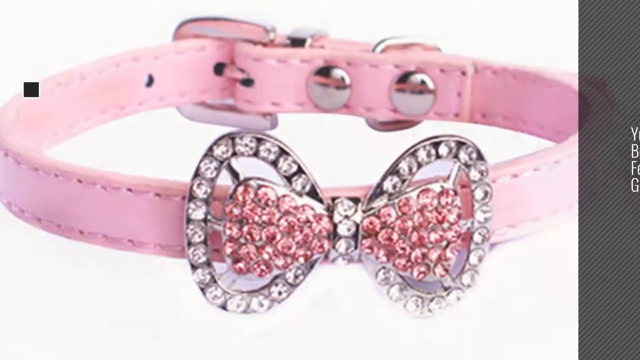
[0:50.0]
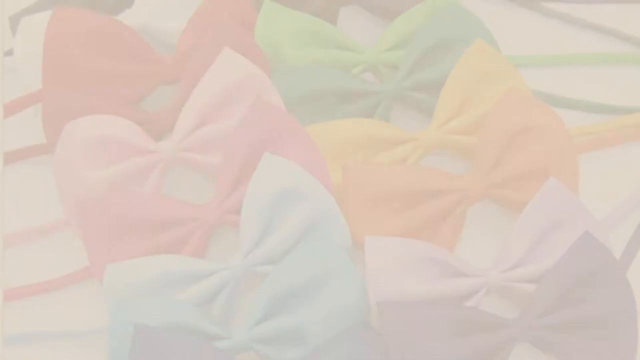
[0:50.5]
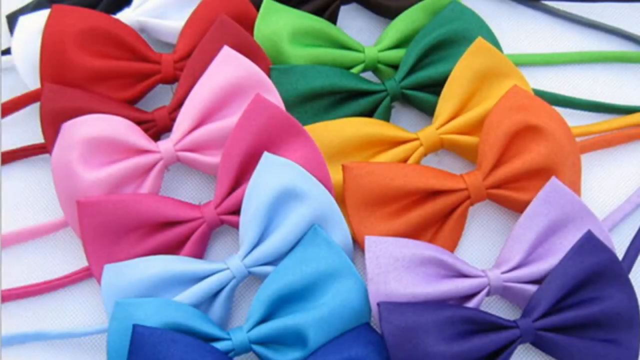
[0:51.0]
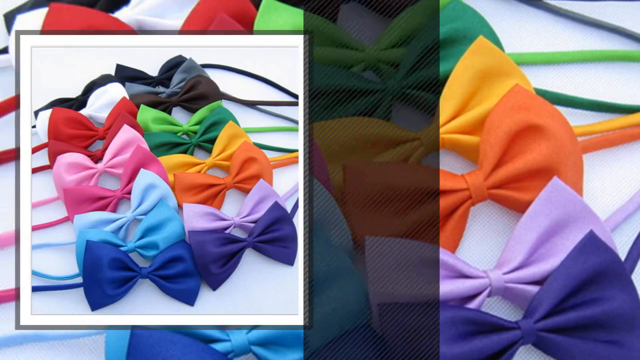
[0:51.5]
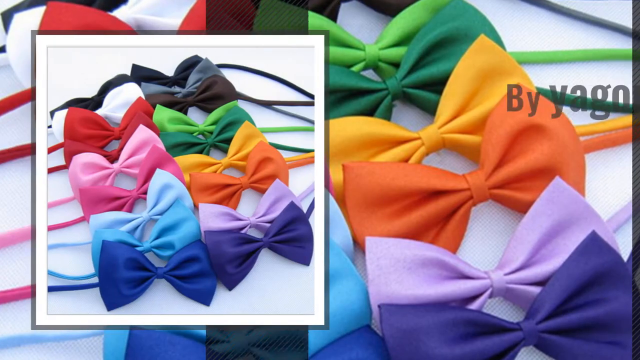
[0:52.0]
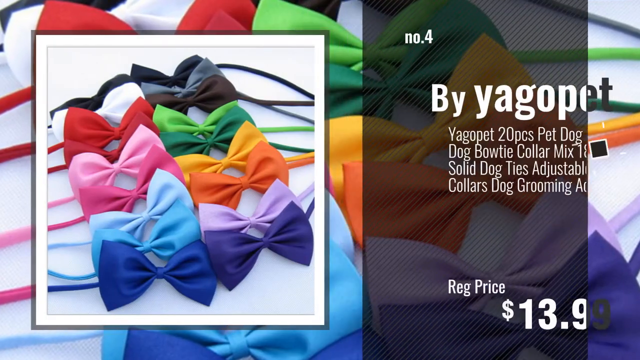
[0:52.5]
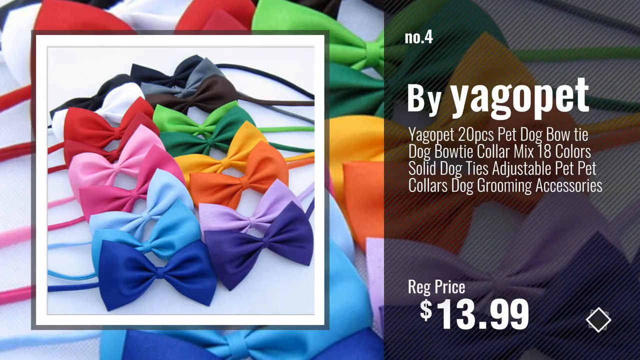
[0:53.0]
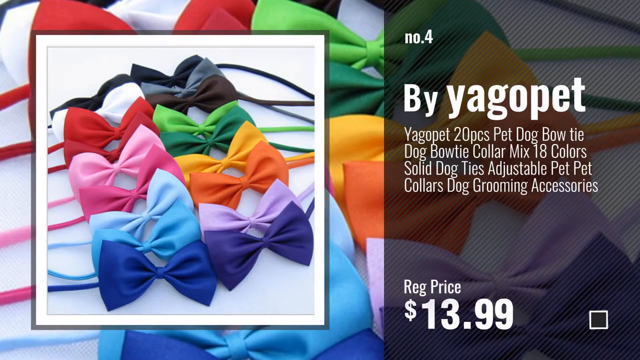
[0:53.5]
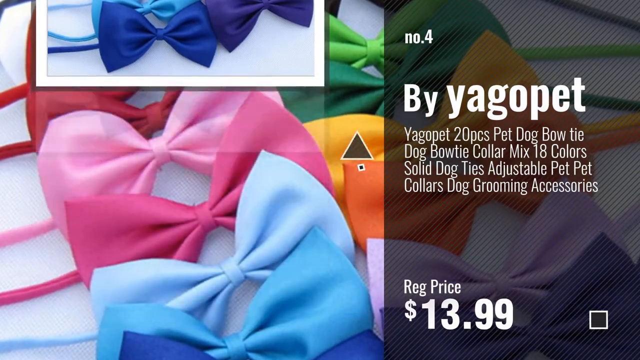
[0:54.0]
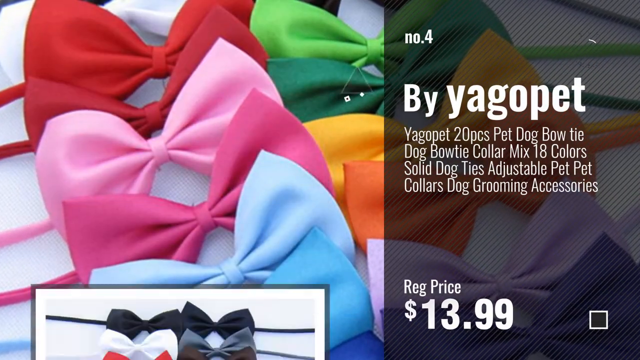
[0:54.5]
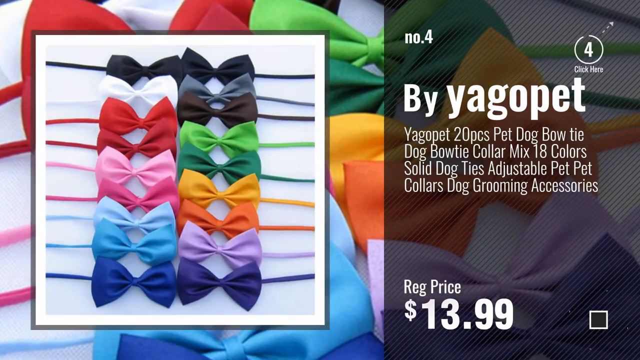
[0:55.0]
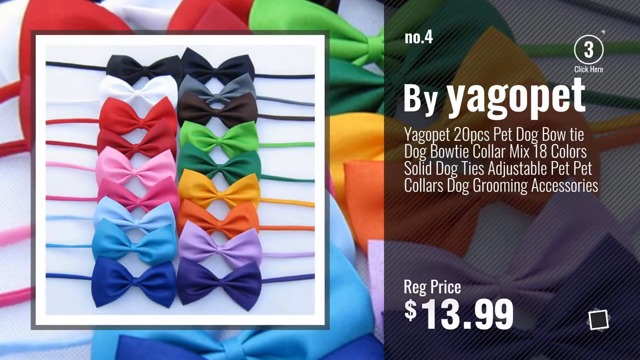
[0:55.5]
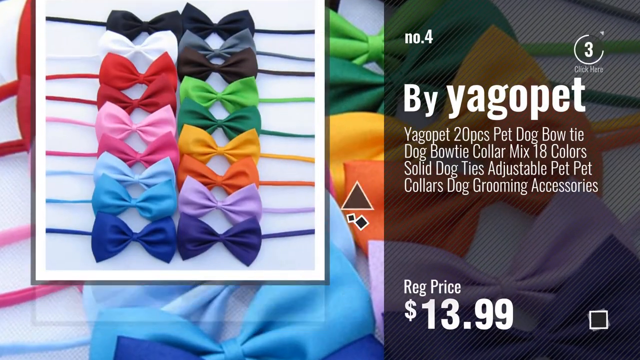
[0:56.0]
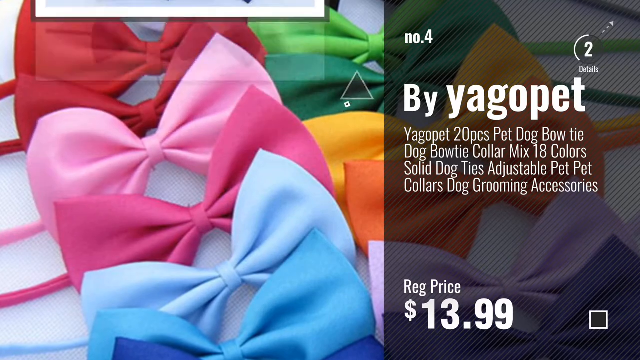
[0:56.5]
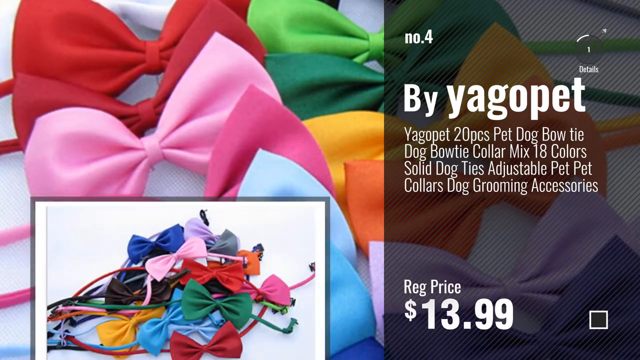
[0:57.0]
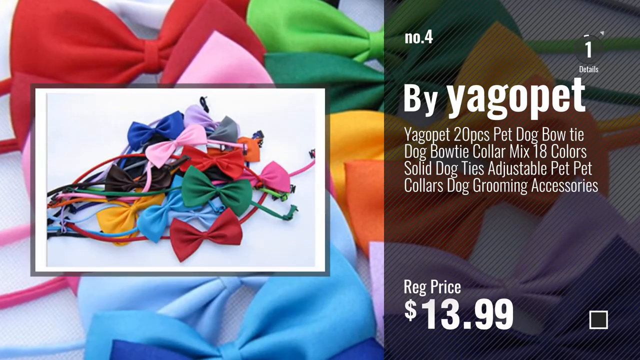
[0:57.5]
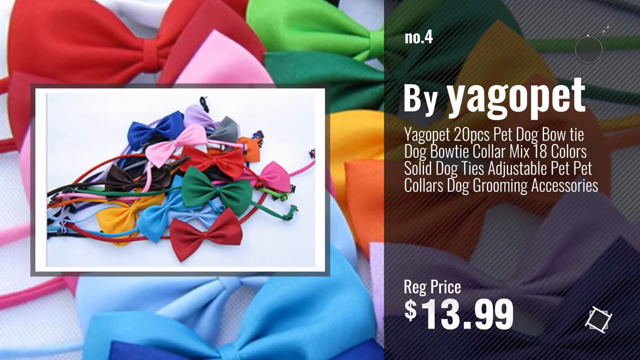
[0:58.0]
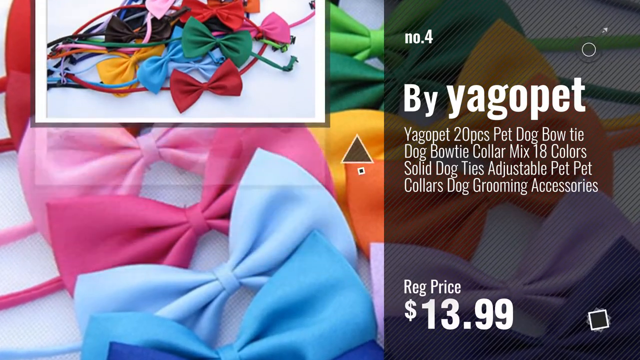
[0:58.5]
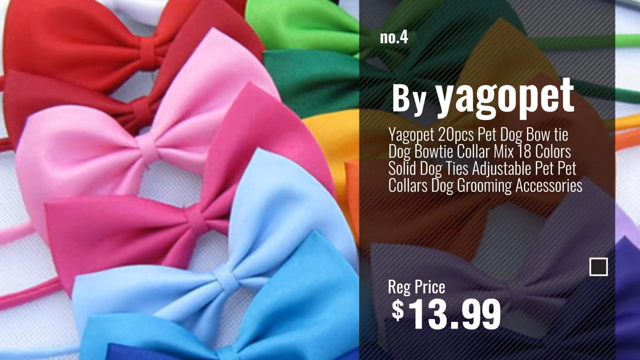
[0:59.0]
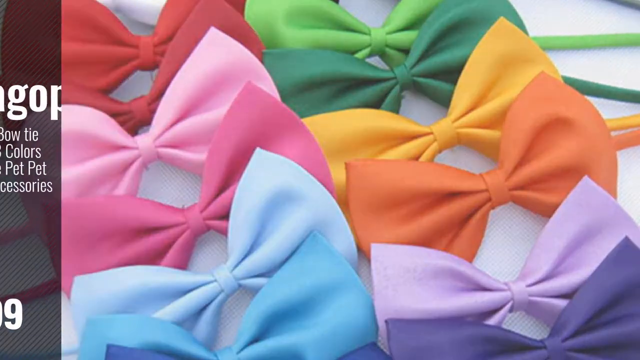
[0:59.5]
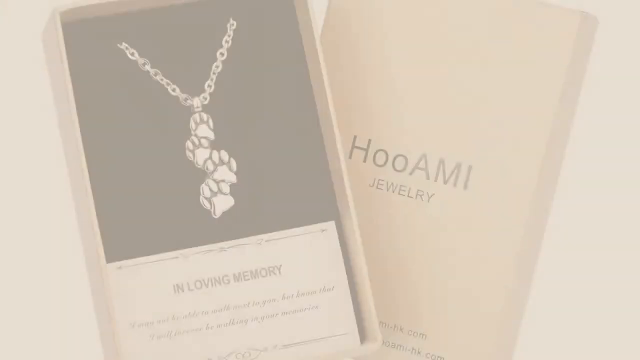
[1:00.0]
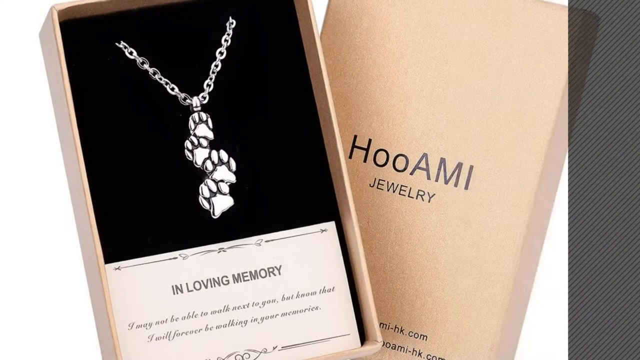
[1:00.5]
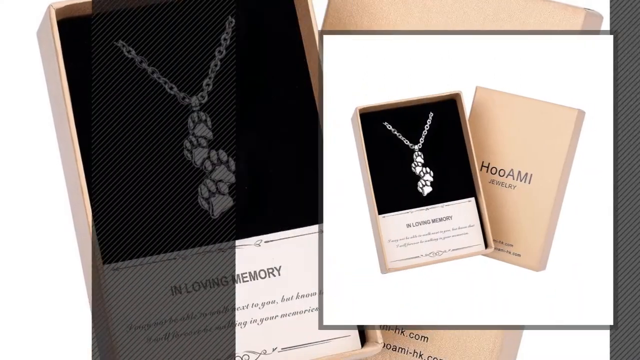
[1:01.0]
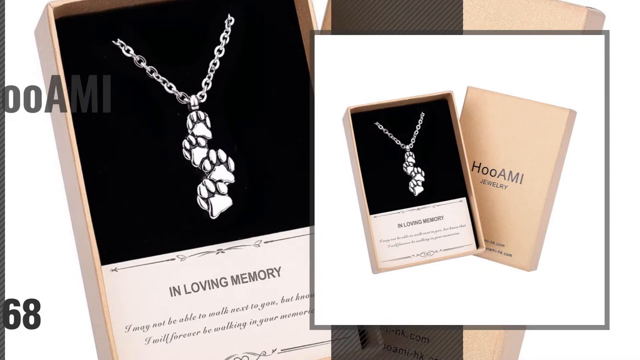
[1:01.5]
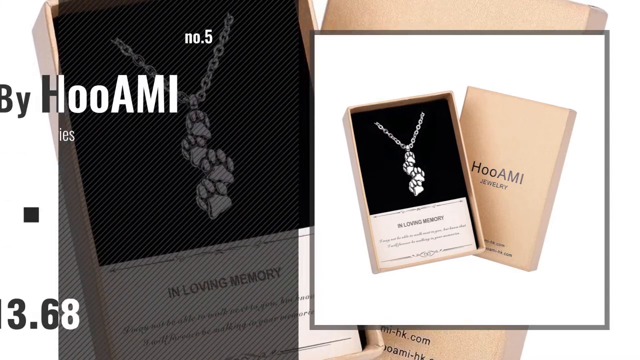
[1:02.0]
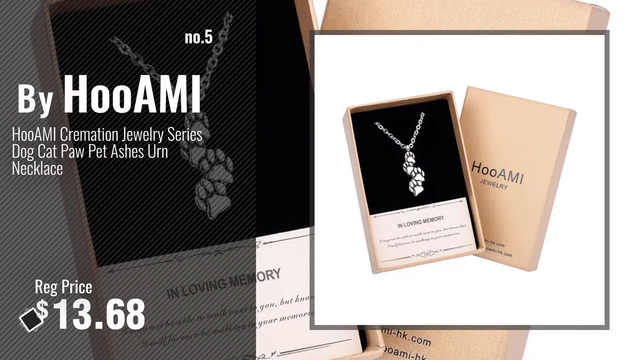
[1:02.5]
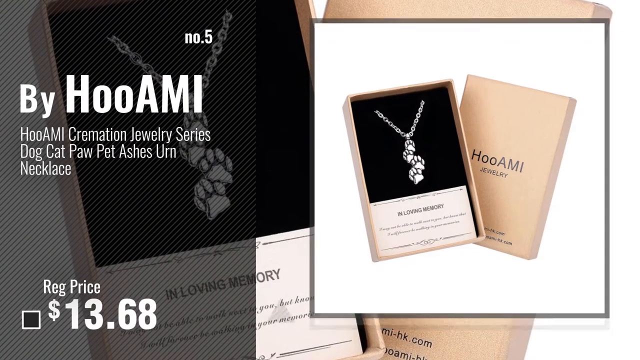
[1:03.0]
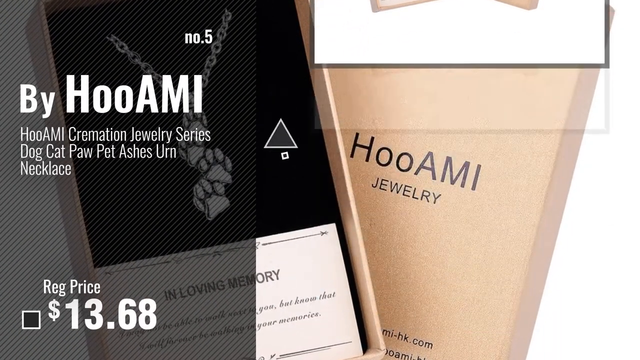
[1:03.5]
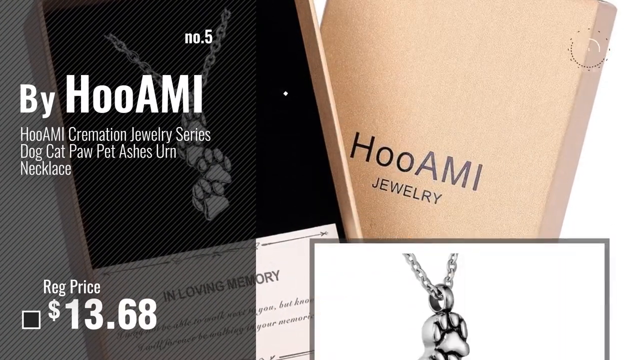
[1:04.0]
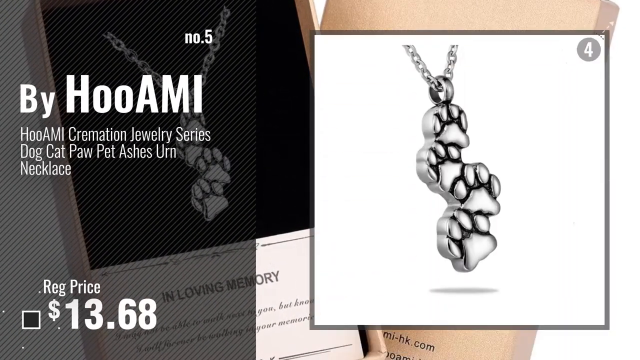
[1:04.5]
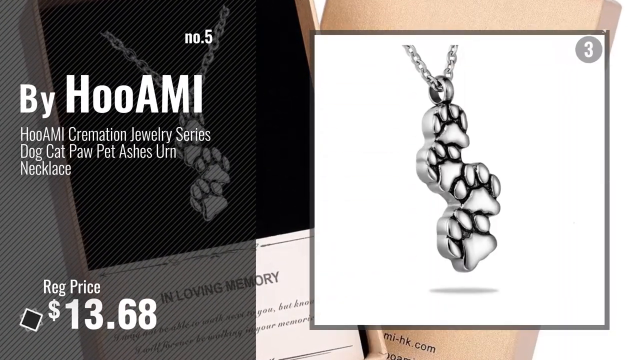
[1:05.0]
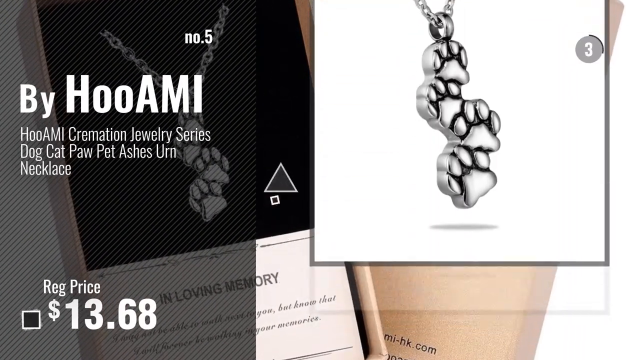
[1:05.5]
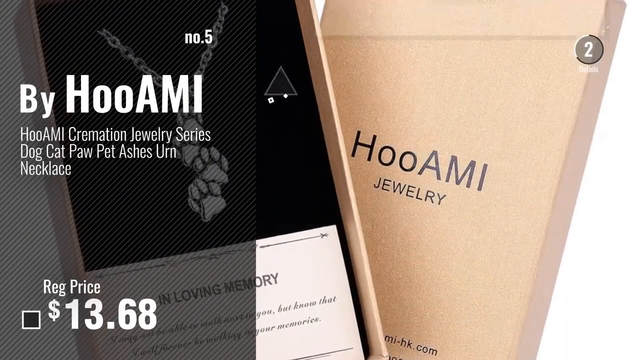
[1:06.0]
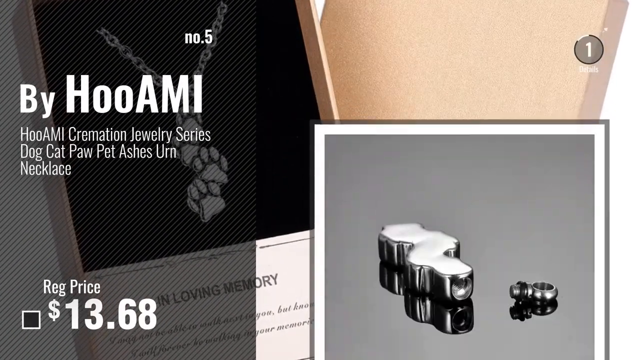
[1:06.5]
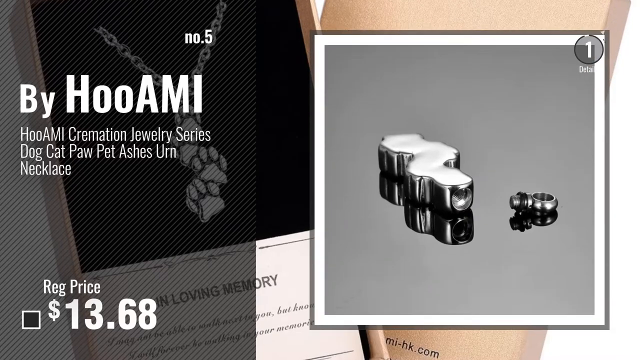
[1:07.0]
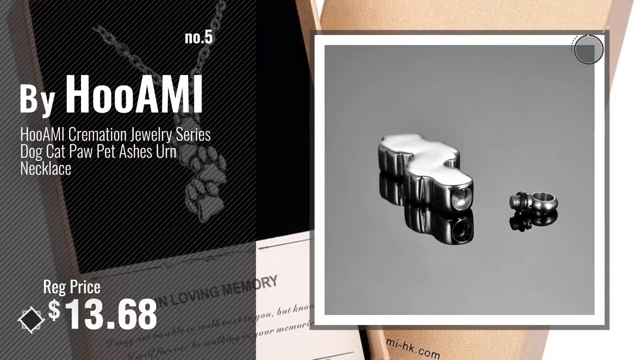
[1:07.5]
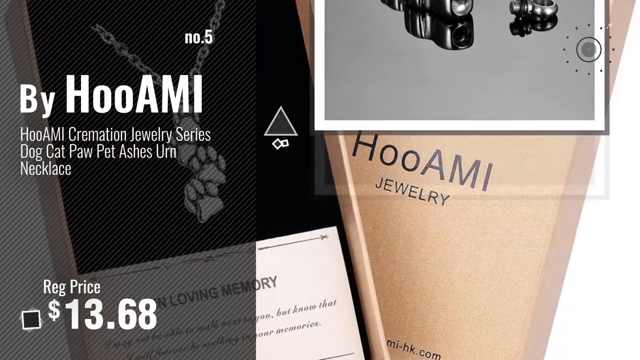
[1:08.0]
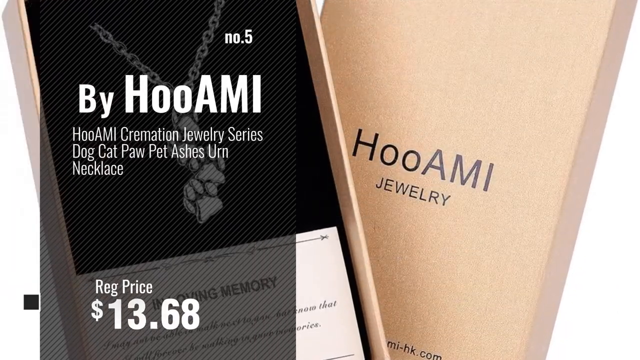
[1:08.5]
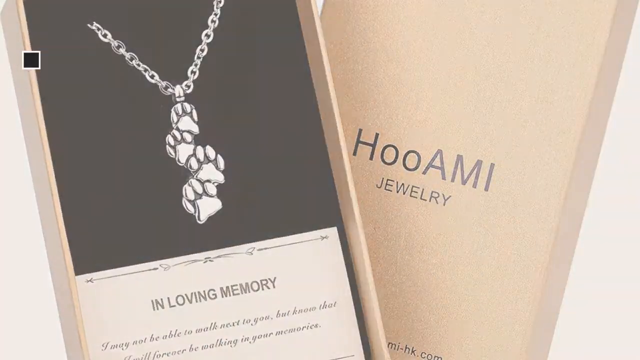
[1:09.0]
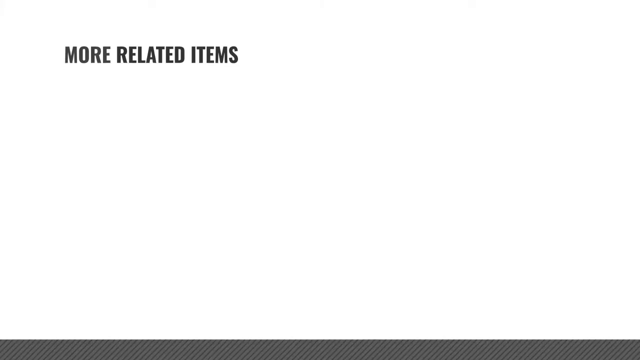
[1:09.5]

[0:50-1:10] A pink dog collar is shown in close-up. The view switches to an image of a puppy, then to approximately 16 multicoloured fabric dog bows on strings that could be worn as necklaces. An inset square shows a closer image of all the bows. They are by Yago Pet, a set of 20 pieces of pet dog bow ties in a colour mix of 18 colours, solid dog ties, adjustable pet collars, dog grooming accessories, priced at $13.99. The inset image lifts upwards off the screen and a new image is displayed in which the colours can be seen more clearly: two black bows, white, grey, two red, brown, two different shades of green, two different shades of pink, three different shades of blue, lilac, purple, yellow and orange. Next is a picture of all the bows tangled up on top of each other in a pile.